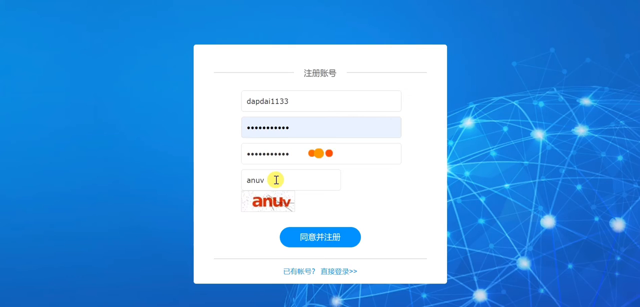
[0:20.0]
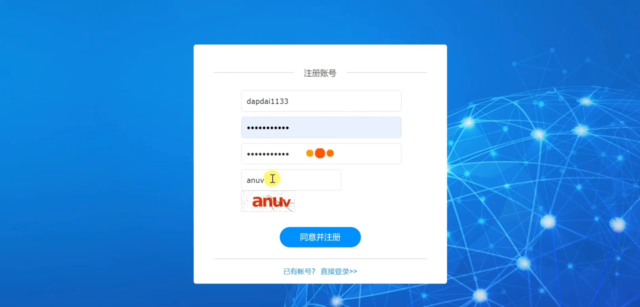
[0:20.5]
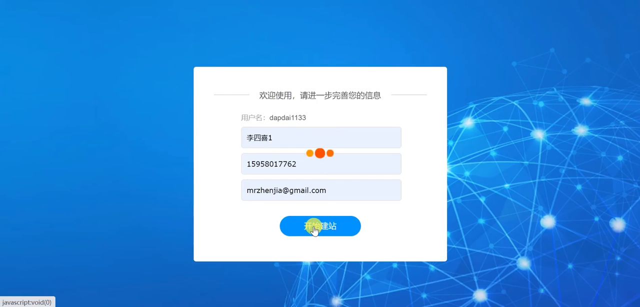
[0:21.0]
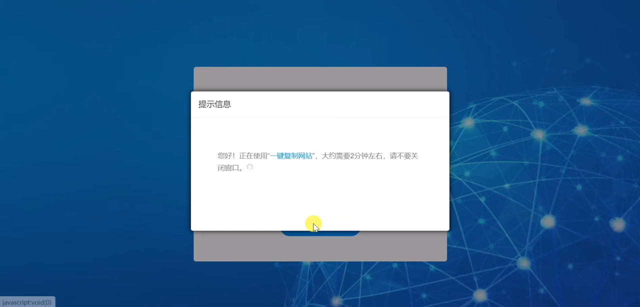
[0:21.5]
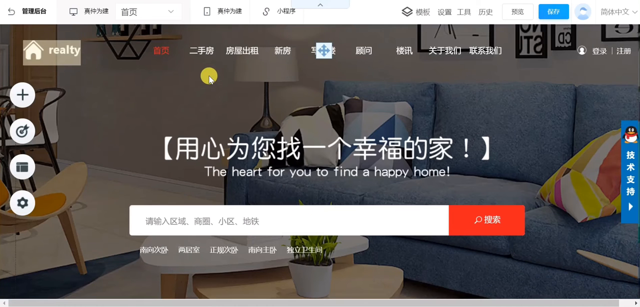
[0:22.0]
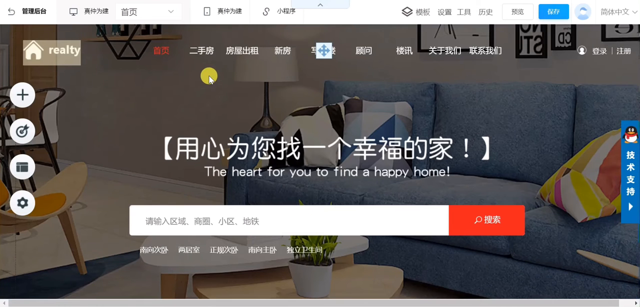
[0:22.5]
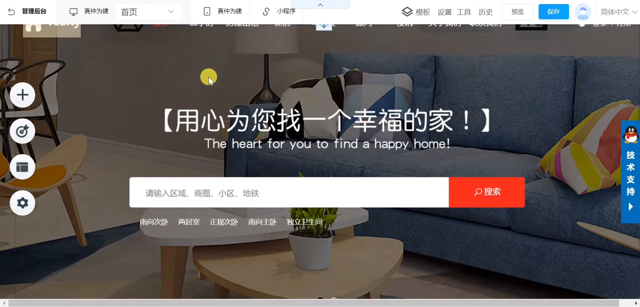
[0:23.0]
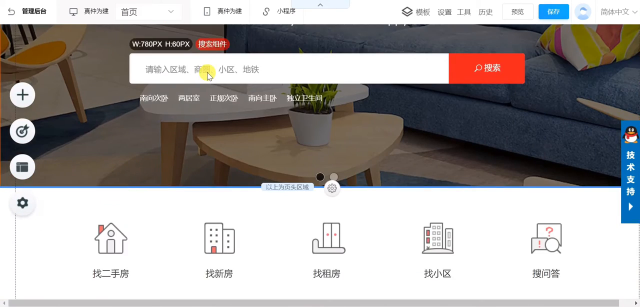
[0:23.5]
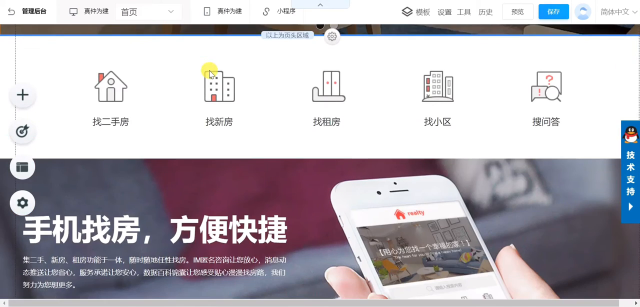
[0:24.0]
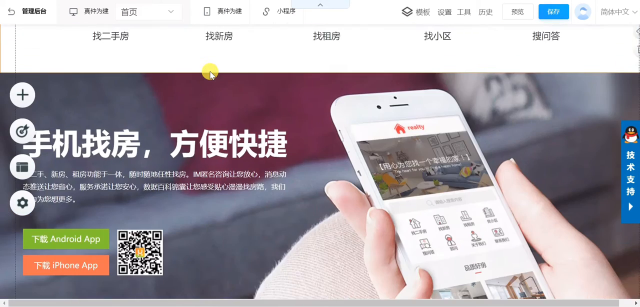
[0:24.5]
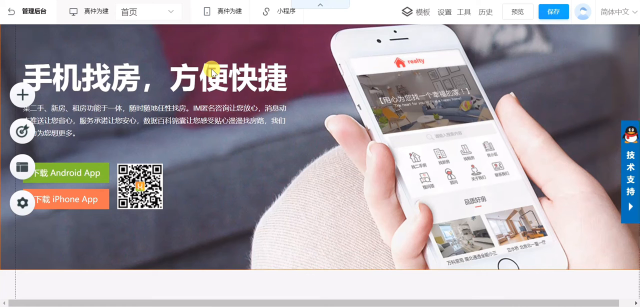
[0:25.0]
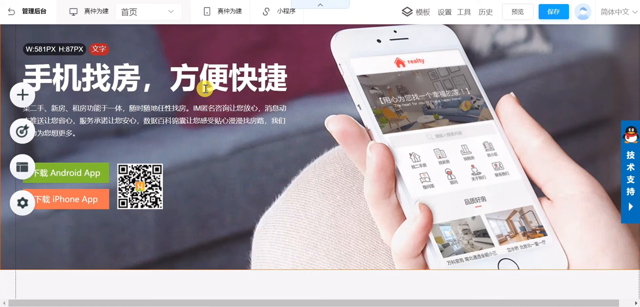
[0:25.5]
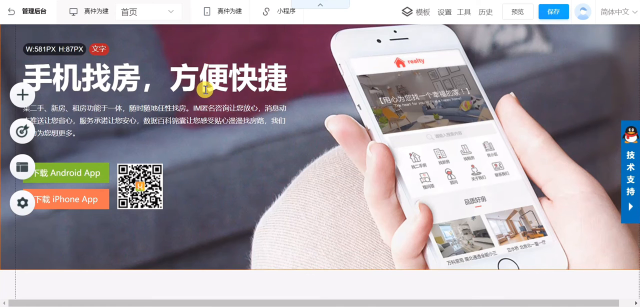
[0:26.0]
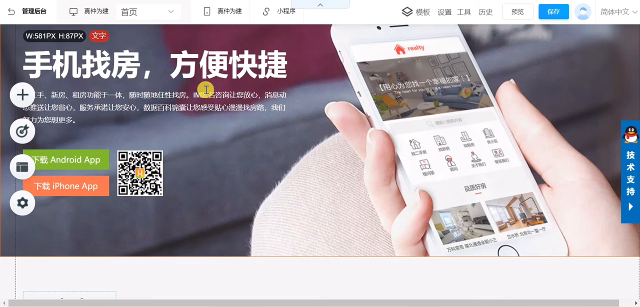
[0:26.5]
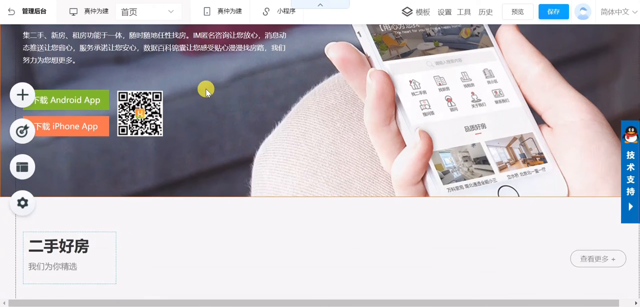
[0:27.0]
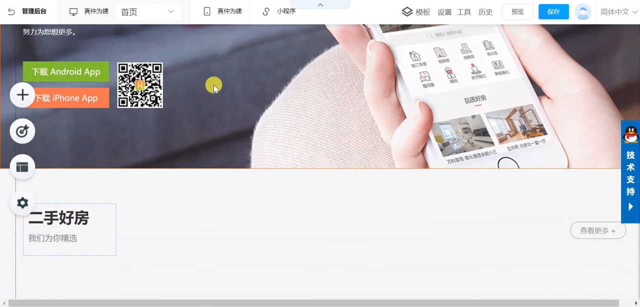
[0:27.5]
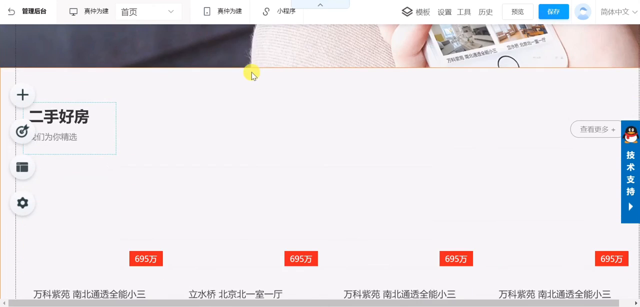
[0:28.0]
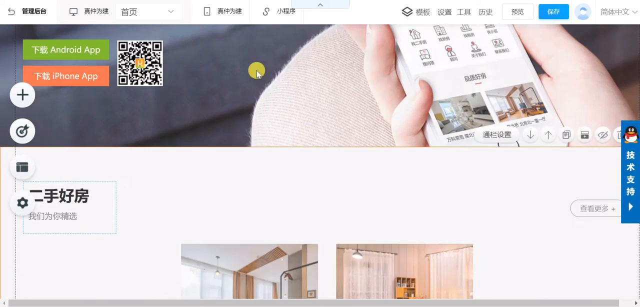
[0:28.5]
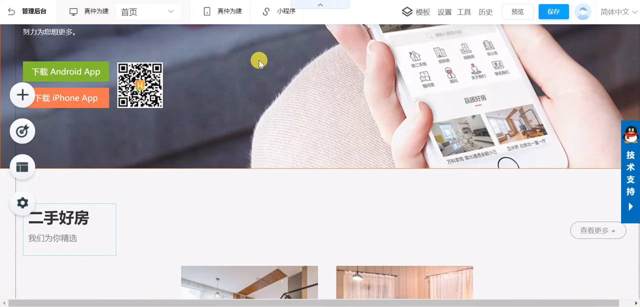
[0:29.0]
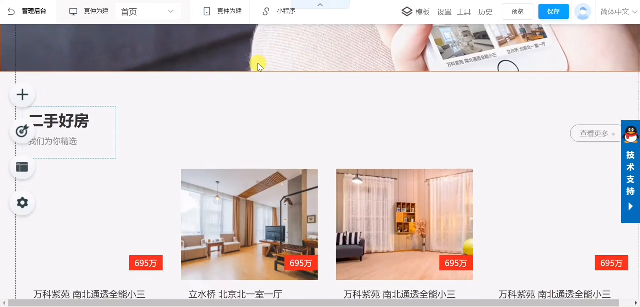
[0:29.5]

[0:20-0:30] After clicking into the demo, what looks like a login screen appears, with the top portion of the screen still in Asian characters. On the first line the person types "DAPDAI113", then enters a password that is obscured and repeats it. The bottom line asks for a verification code to prove they are not a robot, showing the letters "ANUV", and under that is an enter or login button in blue with yellow-white text in Asian characters. The screen rolls as though processing, and then a demo WordPress site is logged into, with multiple placeholders and faux photos. The cursor now has a yellow circle showing where the person is clicking. At the top there is a line of Asian characters, a photo of a demo living room, and a search toolbar in the middle of the screen. Above the toolbar, example text in English reads "the heart for you to find a happy home"; it is the only English text on the screen. As the screen scrolls, the cursor appears to be showing different functions, and the yellow circle moves around the screen with it.